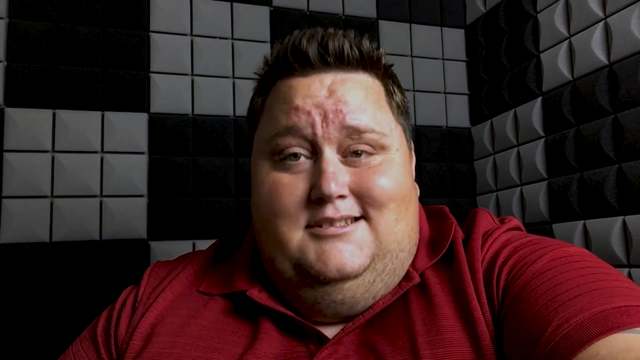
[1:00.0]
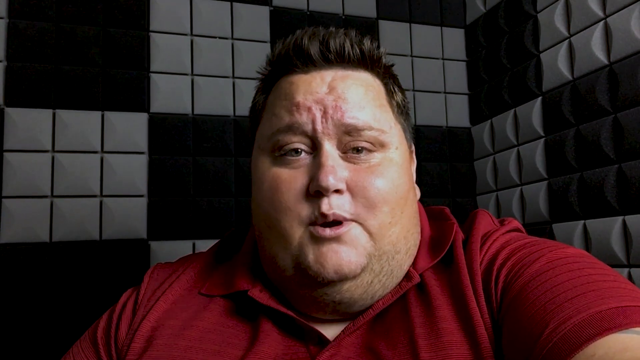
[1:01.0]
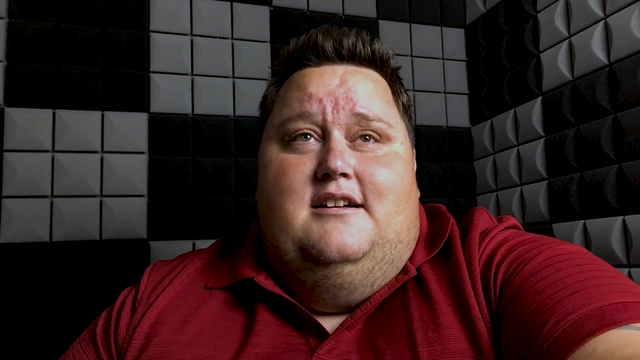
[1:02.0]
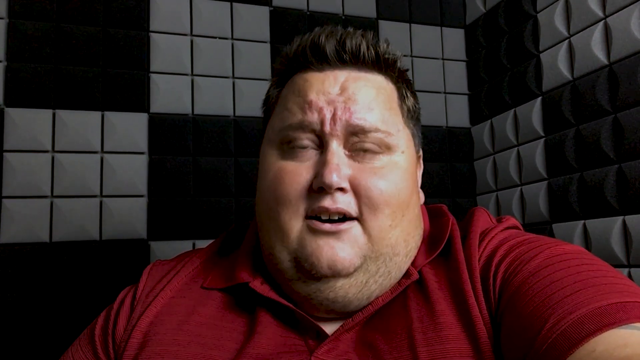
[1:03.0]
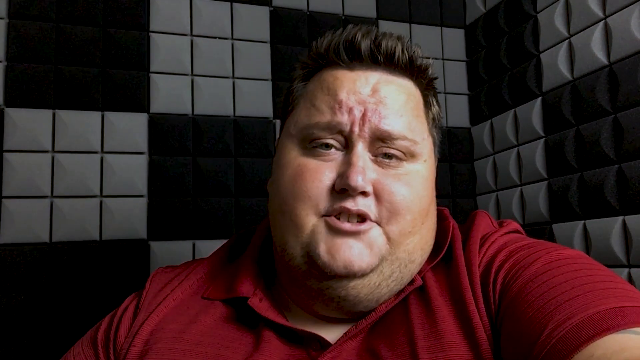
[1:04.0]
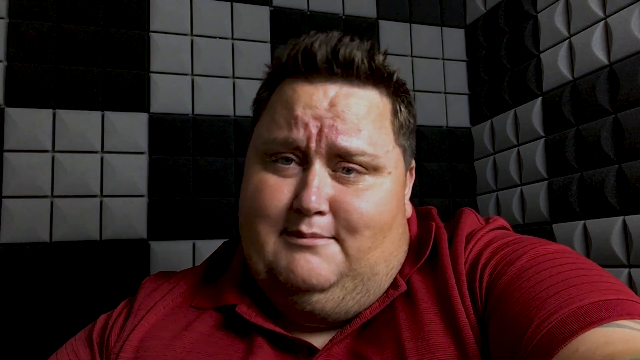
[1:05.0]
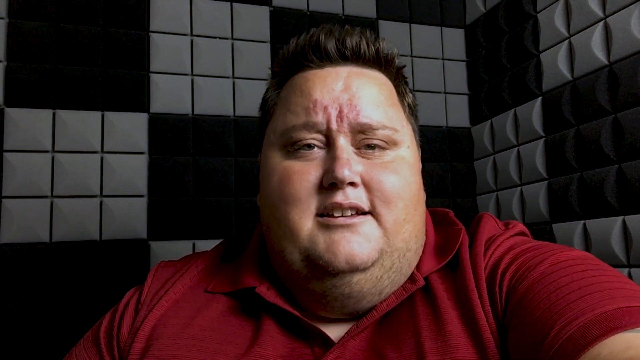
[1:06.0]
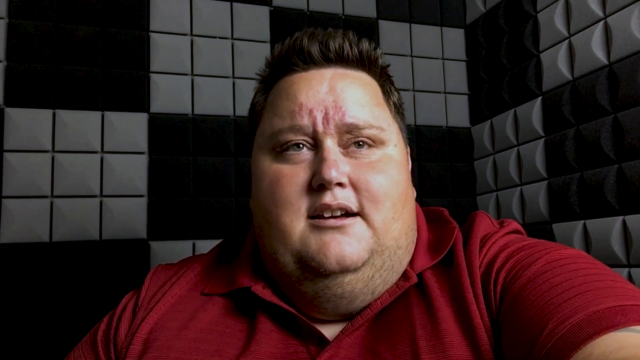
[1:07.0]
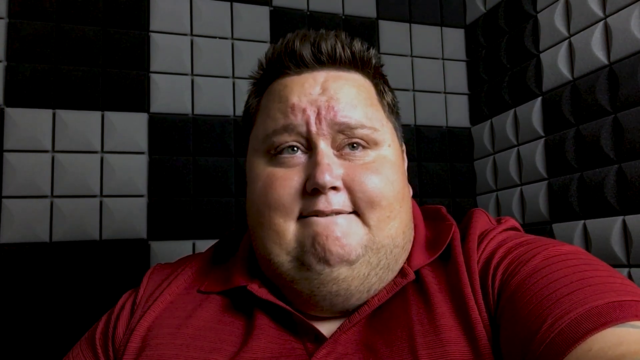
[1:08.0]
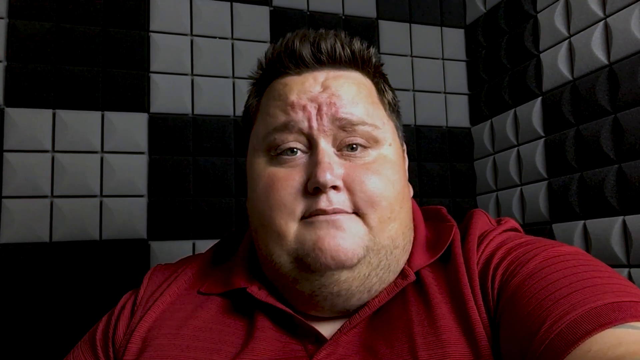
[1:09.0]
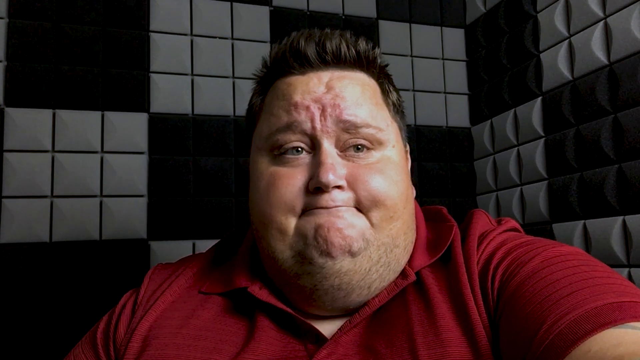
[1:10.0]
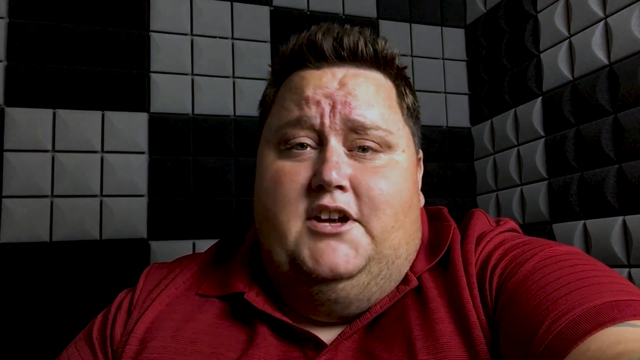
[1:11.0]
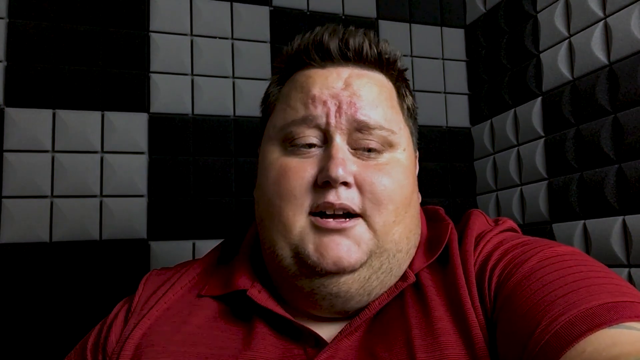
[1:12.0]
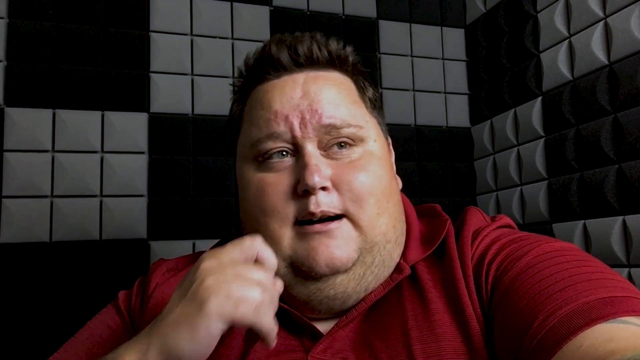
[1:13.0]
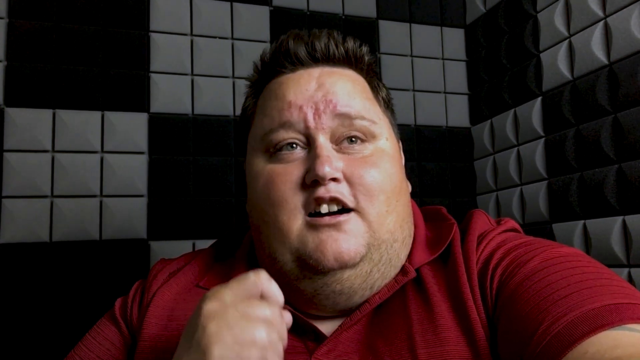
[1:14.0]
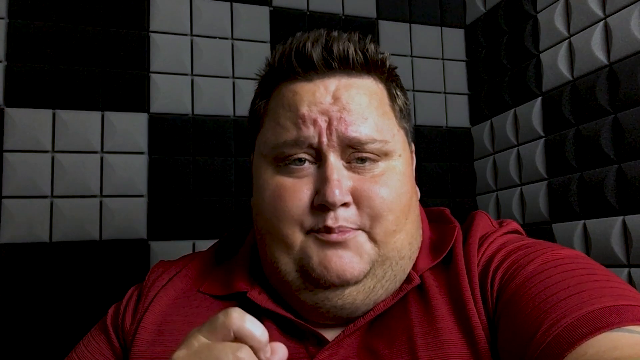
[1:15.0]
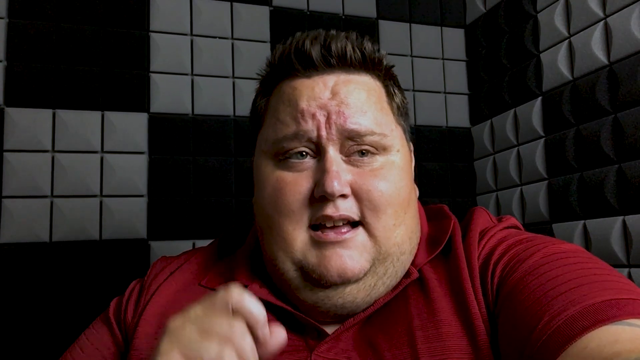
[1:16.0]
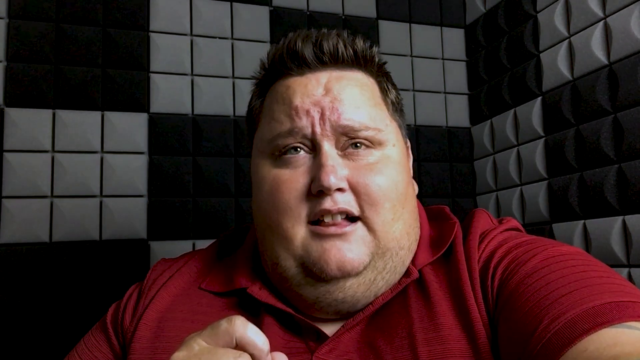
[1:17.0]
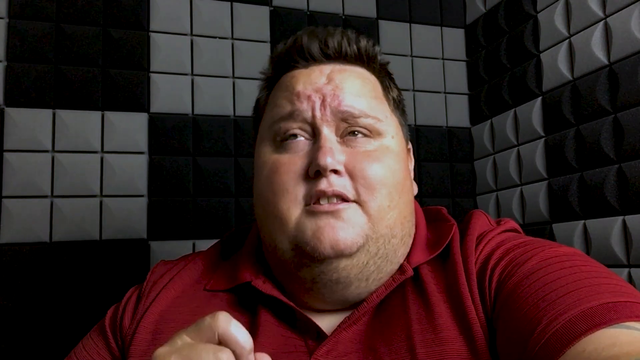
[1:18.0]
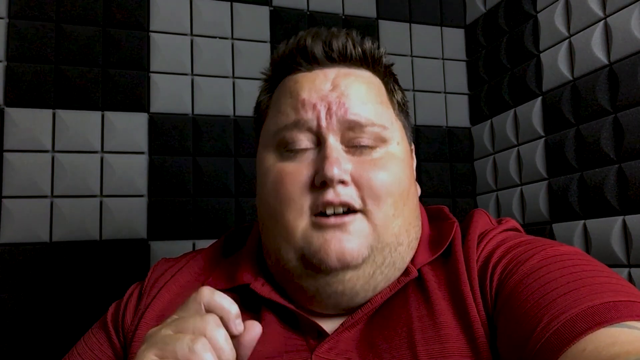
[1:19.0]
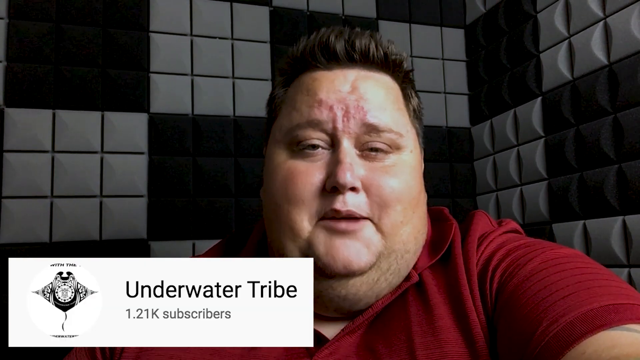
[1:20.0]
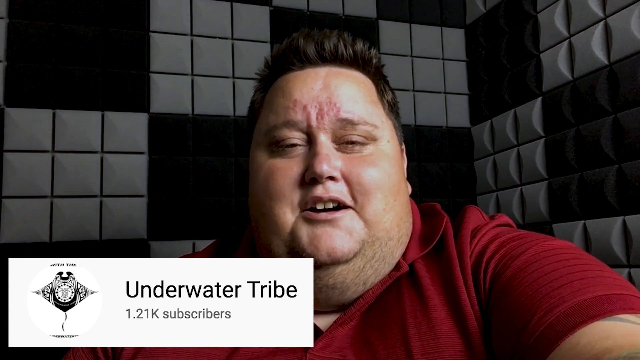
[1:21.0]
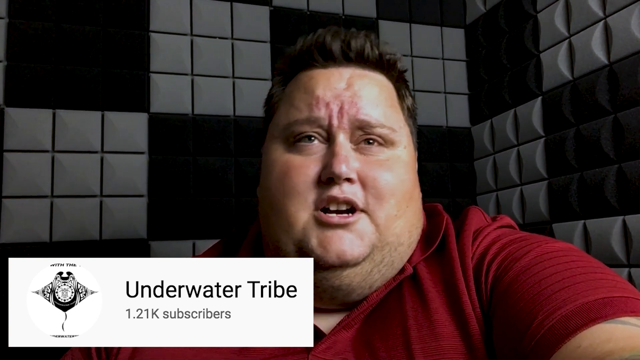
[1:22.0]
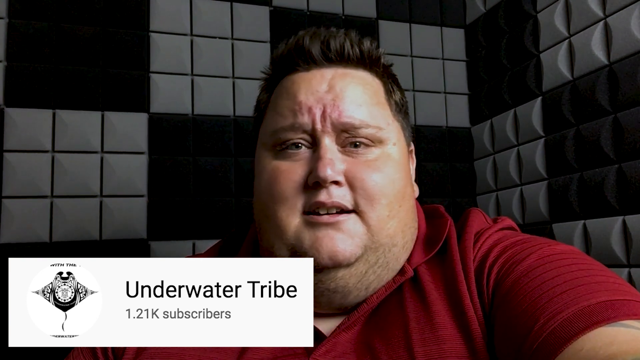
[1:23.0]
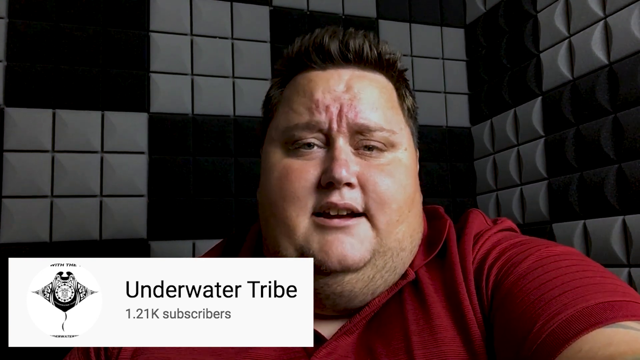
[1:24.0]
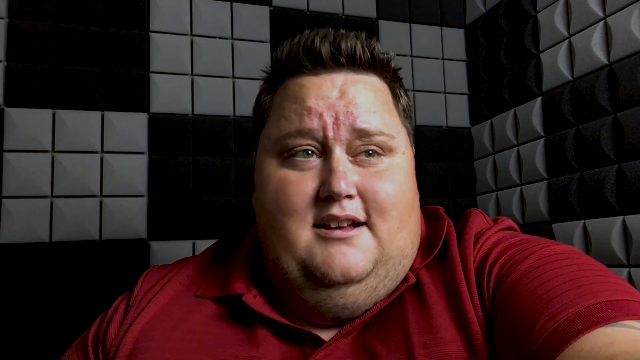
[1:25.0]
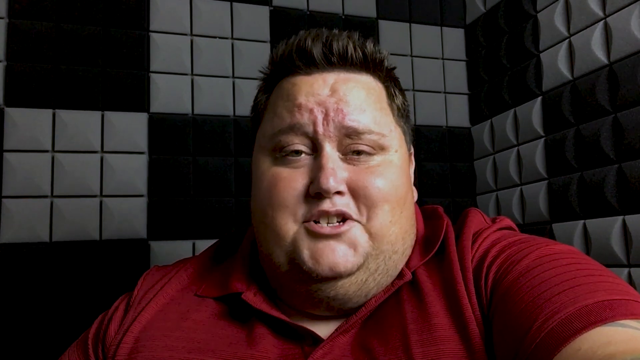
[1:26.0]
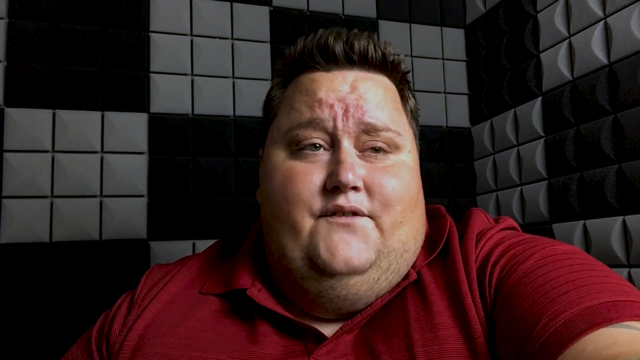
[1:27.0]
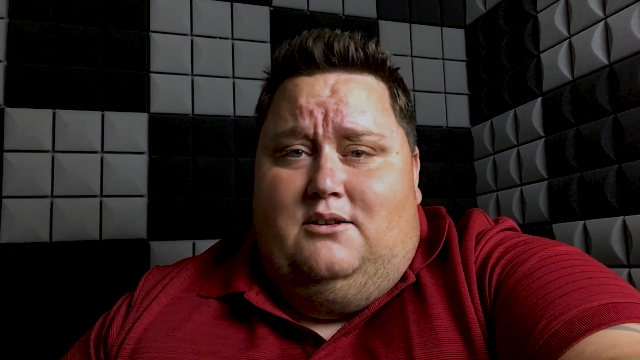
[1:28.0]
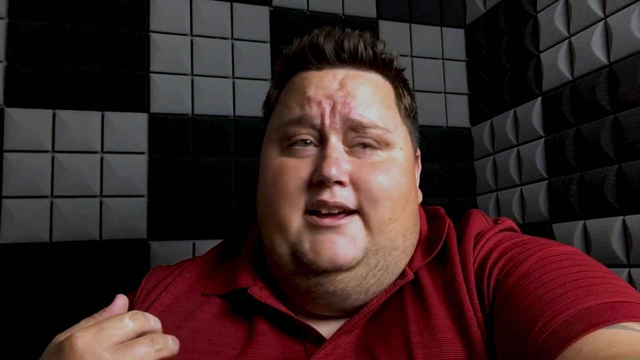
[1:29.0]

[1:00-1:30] A man in a red t-shirt, its collar resting haphazardly on his shoulder, has dark hair, red patches on his forehead, a double chin and strands of hair on his chin. He talks while blinking and moving his head, and he looks unhappy. He bites his lips three times and gesticulates with his hand clenched, looking up and then down as he keeps talking. A white banner appears in the bottom left of the screen with an icon that looks like a stingray and black text reading "window water tribe", with "1.21k subscriber" written in black underneath. The obese man continues moving his lips while one hand sways from left to right and front to back.